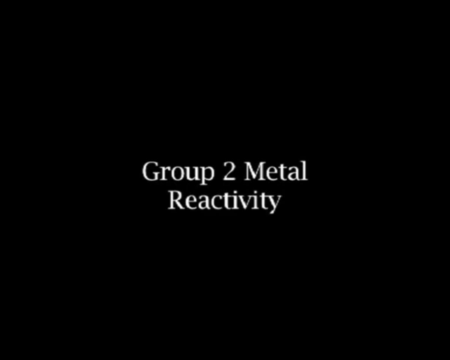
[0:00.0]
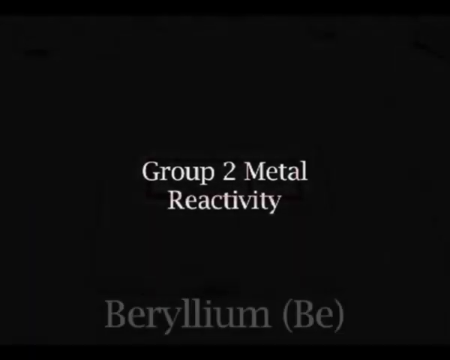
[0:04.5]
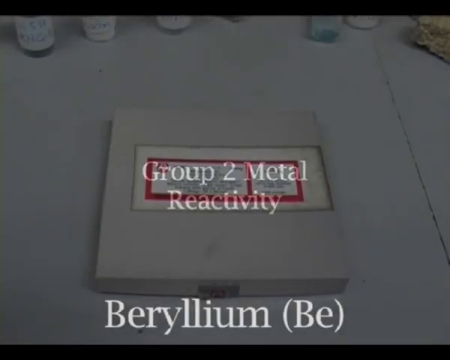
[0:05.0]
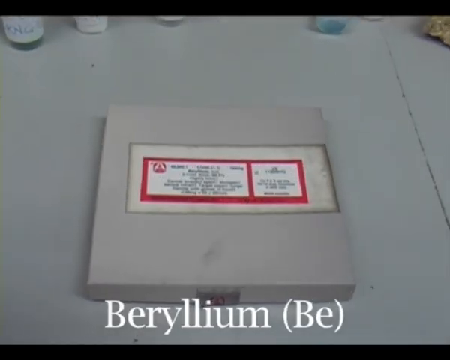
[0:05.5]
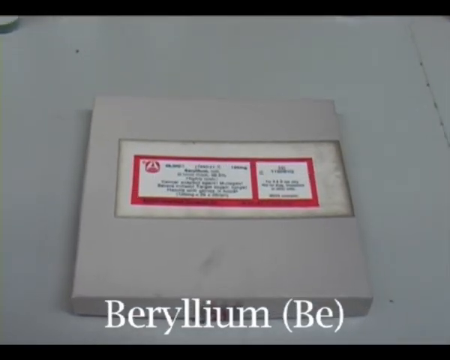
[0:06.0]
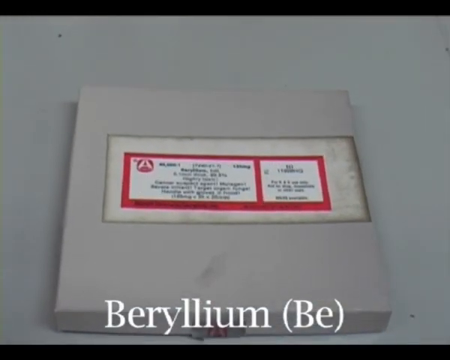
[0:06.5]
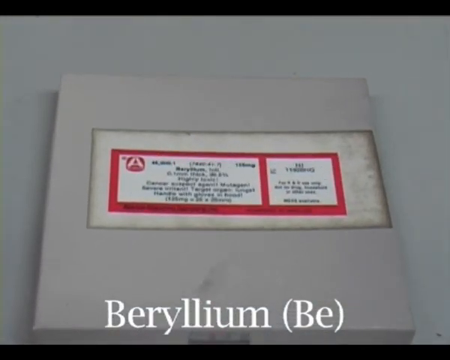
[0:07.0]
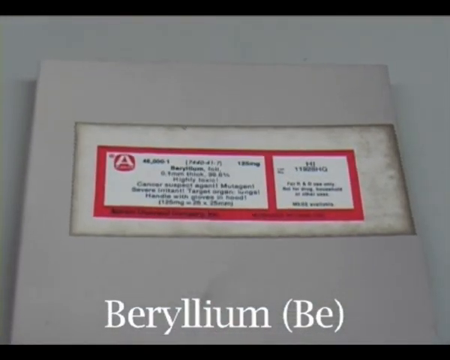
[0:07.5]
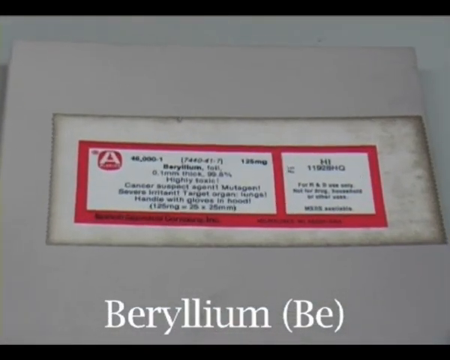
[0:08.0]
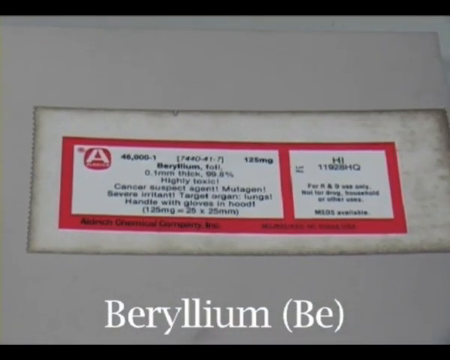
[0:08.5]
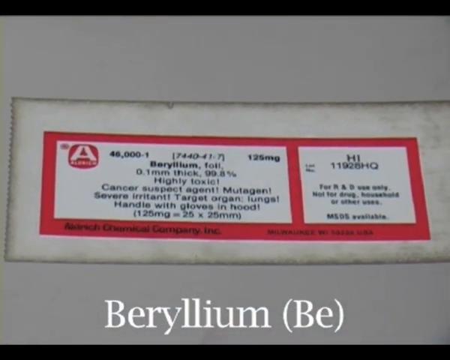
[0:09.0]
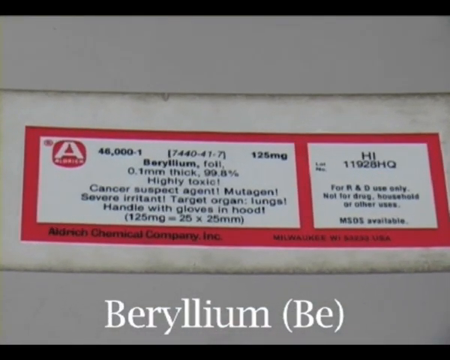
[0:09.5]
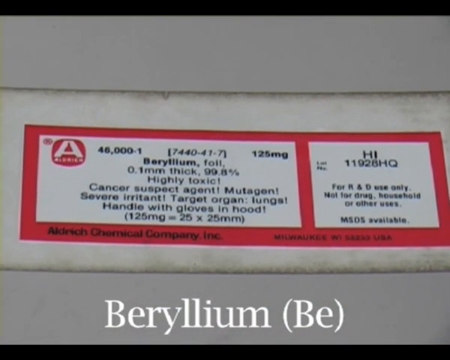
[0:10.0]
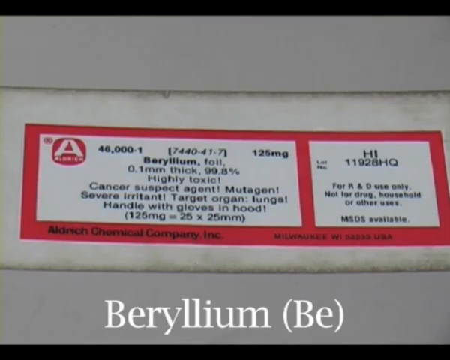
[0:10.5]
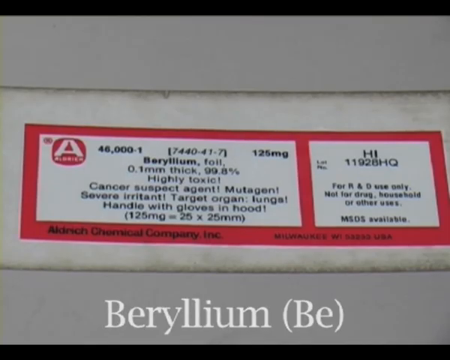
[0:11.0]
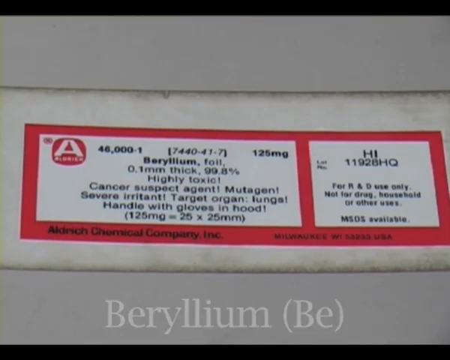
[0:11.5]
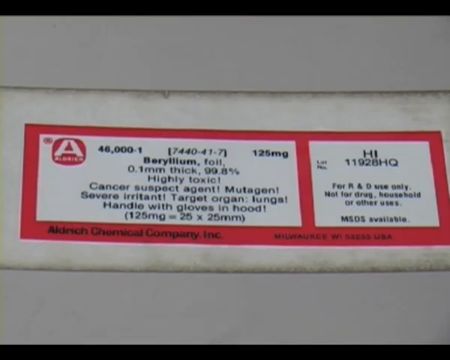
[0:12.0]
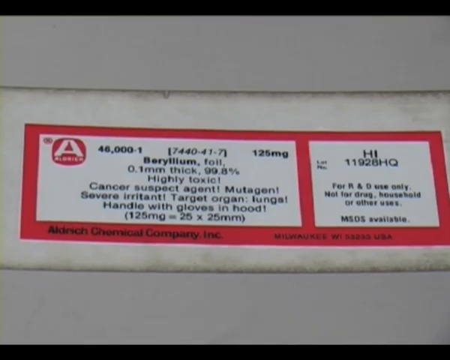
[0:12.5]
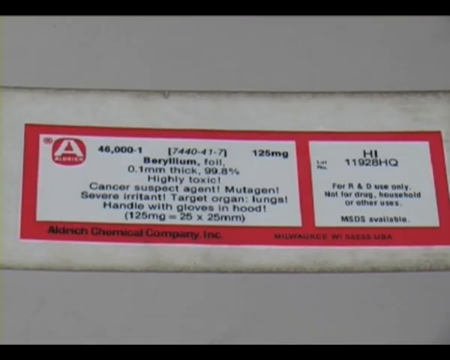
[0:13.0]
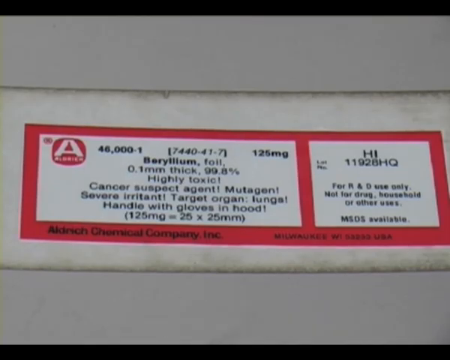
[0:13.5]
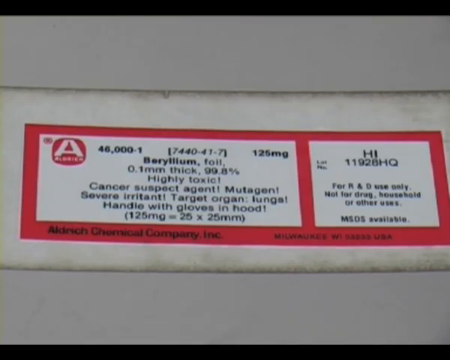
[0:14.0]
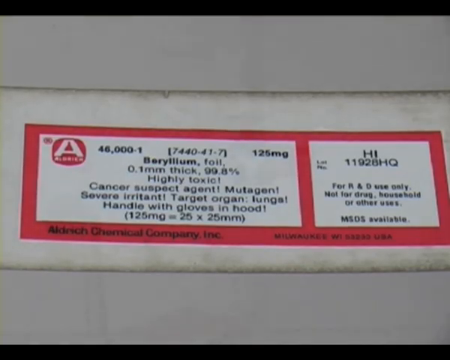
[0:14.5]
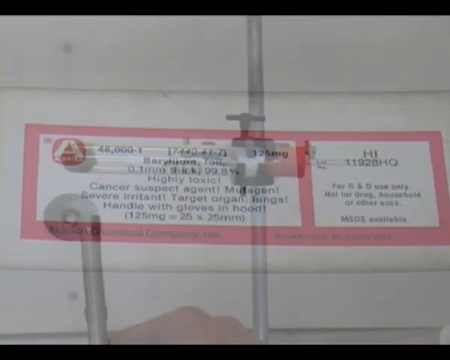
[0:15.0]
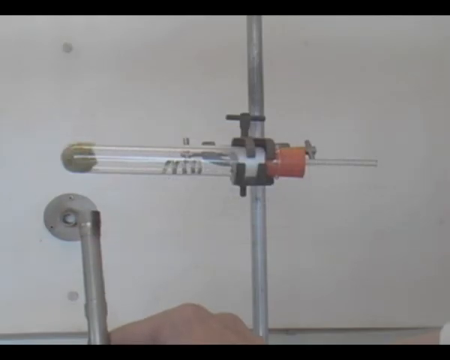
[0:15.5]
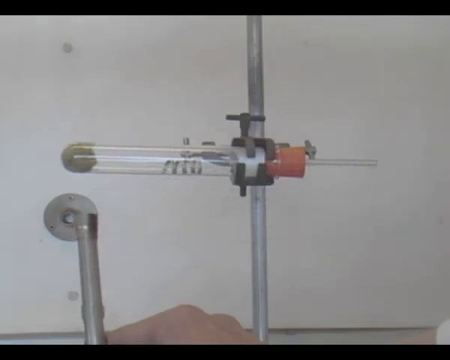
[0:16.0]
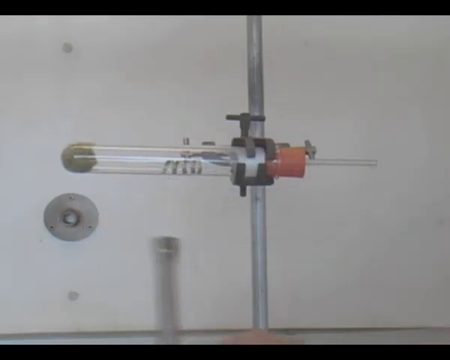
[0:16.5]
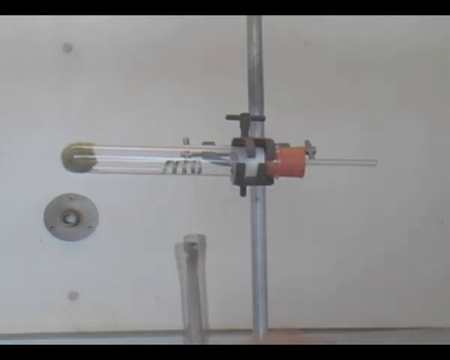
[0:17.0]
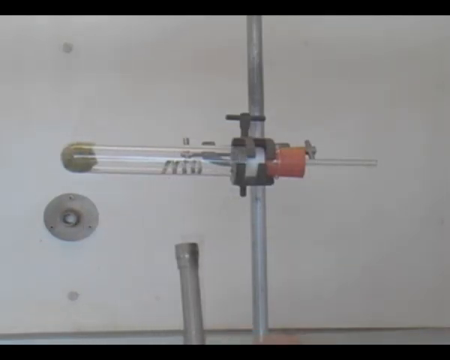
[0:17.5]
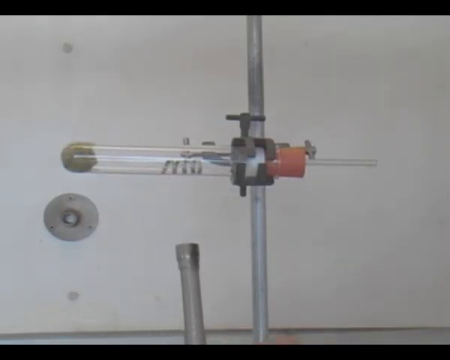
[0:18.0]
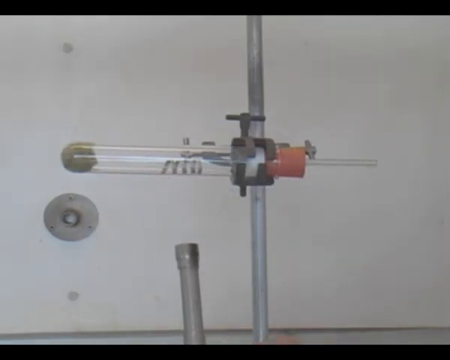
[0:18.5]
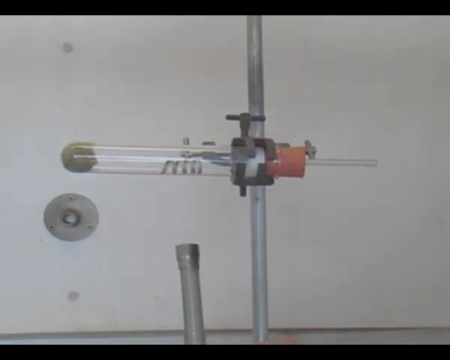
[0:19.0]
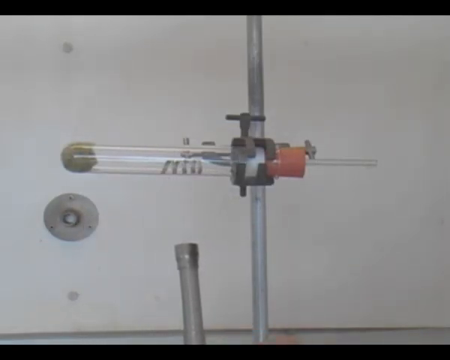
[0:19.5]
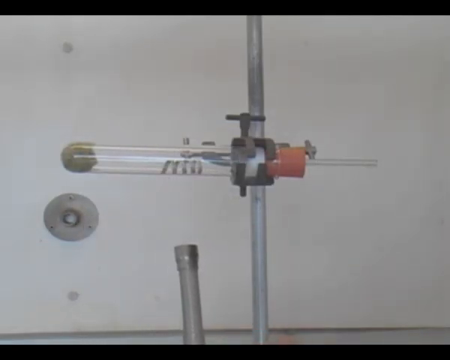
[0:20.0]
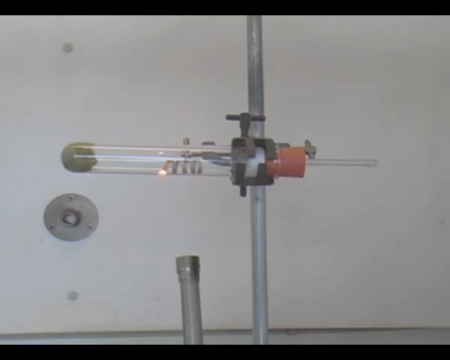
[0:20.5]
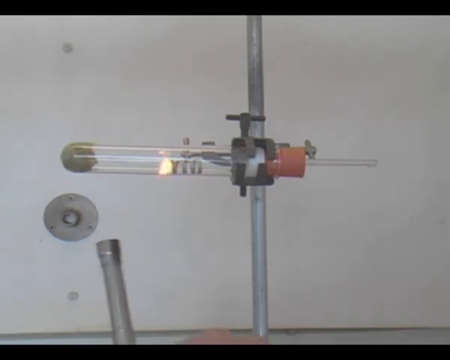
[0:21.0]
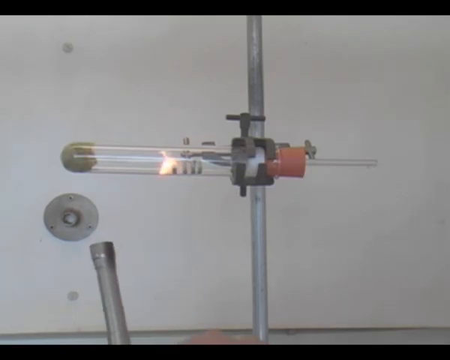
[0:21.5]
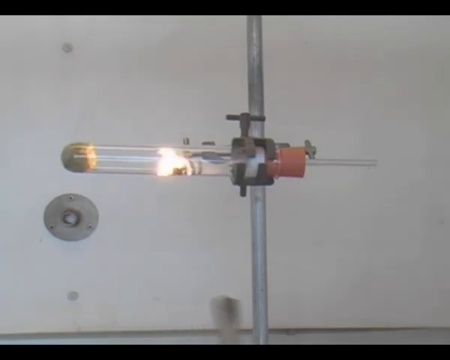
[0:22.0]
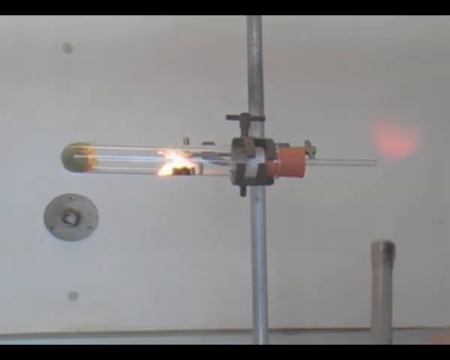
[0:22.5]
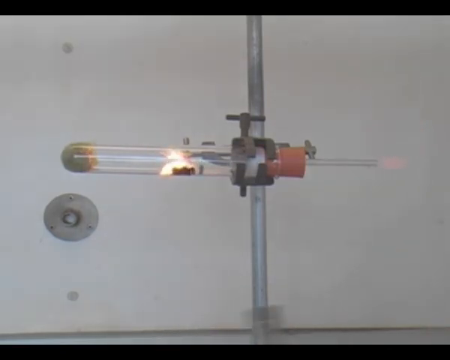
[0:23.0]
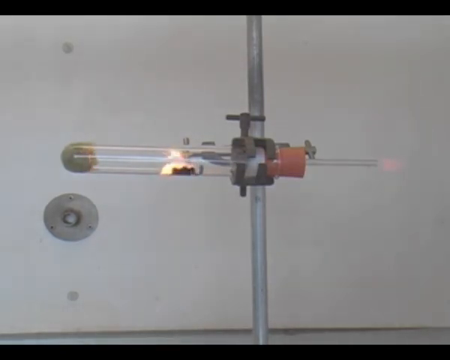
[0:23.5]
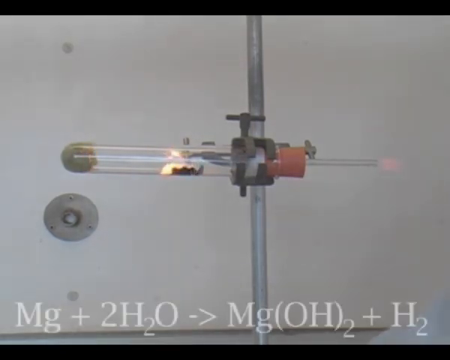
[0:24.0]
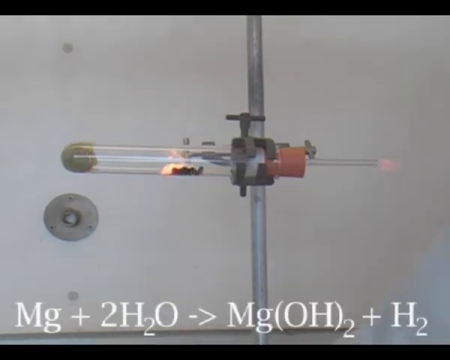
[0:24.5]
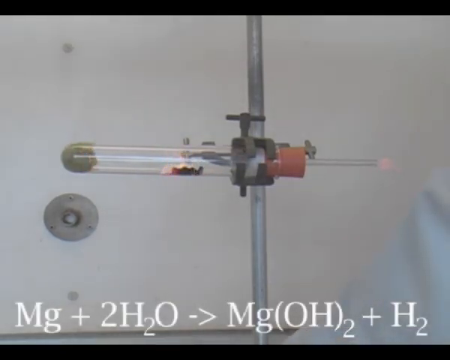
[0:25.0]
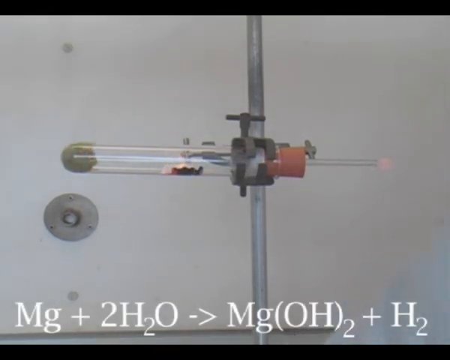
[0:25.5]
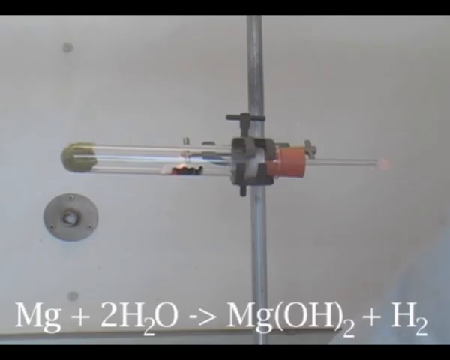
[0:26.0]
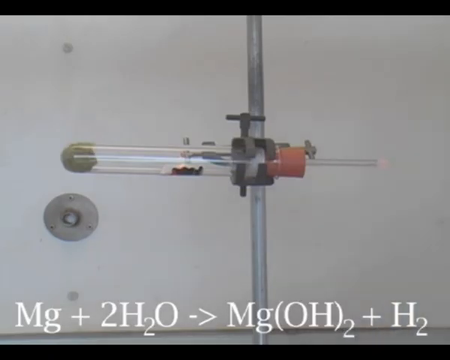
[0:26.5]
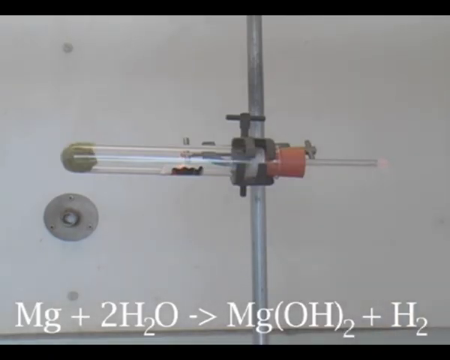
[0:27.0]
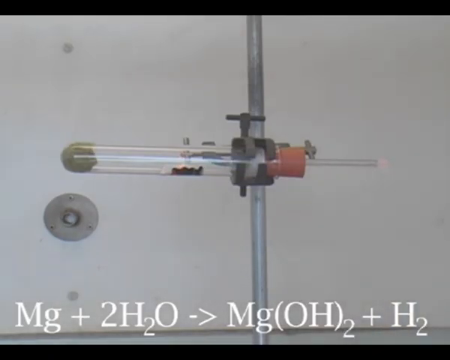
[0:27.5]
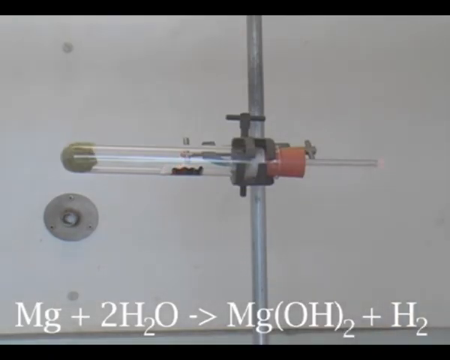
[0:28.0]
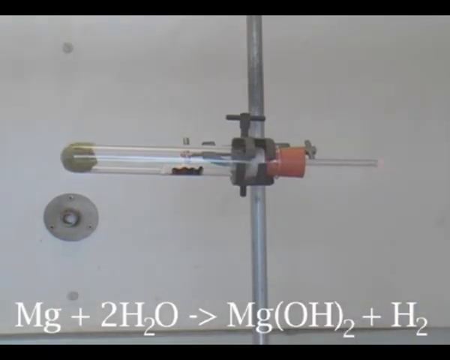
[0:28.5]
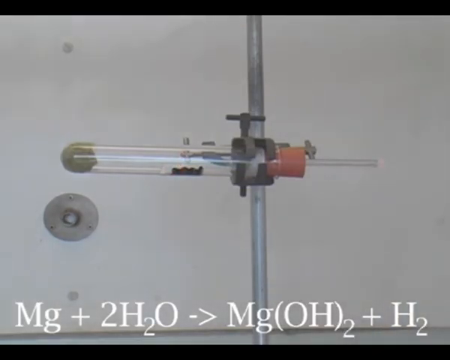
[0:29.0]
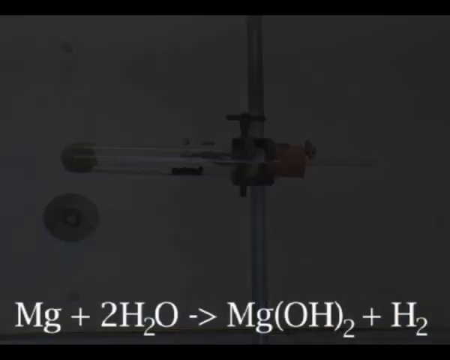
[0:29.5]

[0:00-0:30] The video opens on a black screen with white lettering reading "group two metal reactivity." The first item shown is beryllium, marked B E: a white or grayish box with a white rectangle on the front, a red rectangle and a shorter red rectangle, and many words in black font, though the box is mostly white. Different chemical containers are visible toward the top. Text on the screen reads "beryllium," "125 milligrams," and "handle with gloves in a hood." Next, what looks like a chemistry tube is off to the side, along with a metal pole and something orange, possibly a cork, and someone is lighting something. At the bottom the text reads "Mg + 2H2O -> Mg(OH)2 + H2."